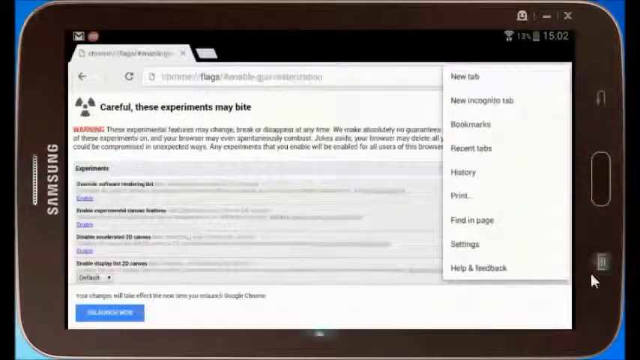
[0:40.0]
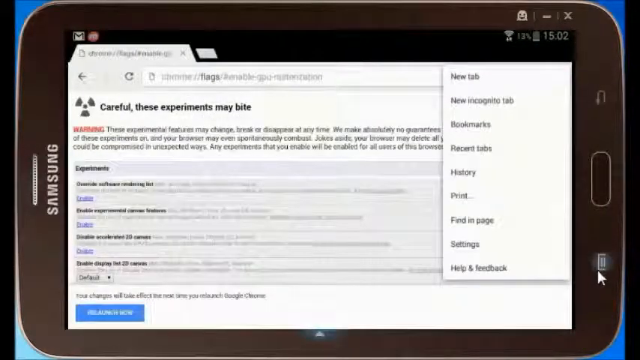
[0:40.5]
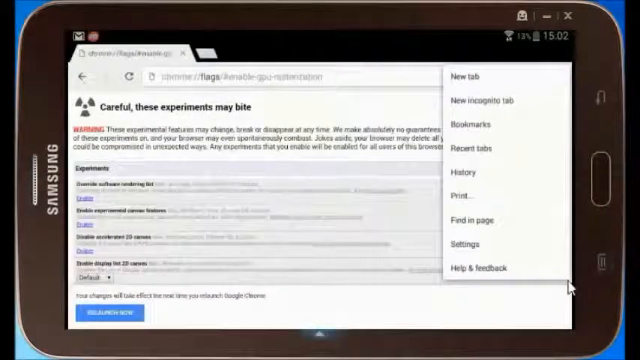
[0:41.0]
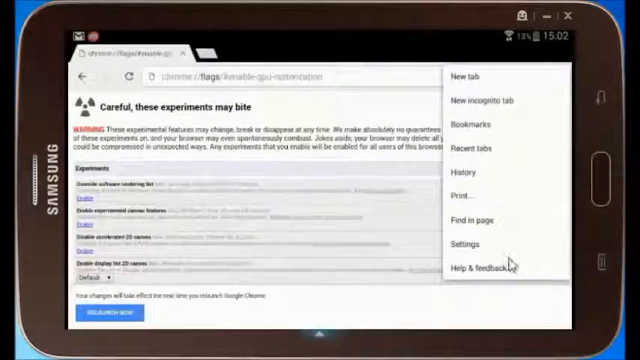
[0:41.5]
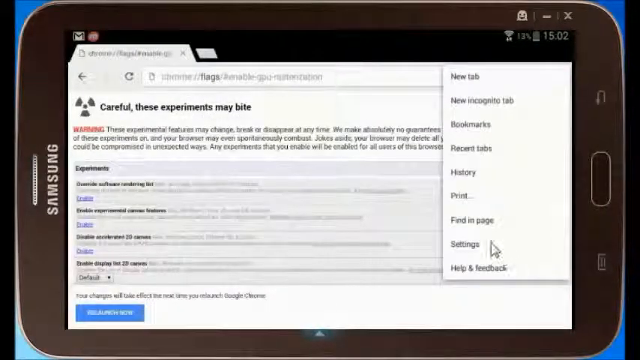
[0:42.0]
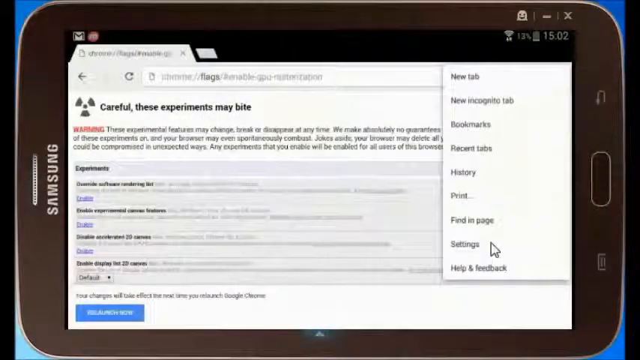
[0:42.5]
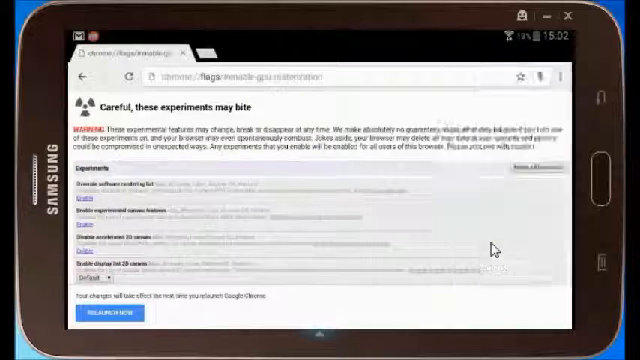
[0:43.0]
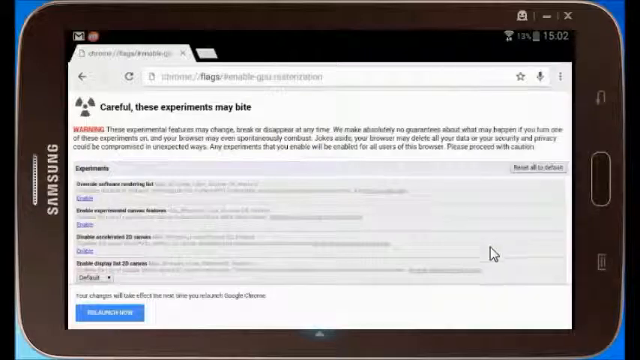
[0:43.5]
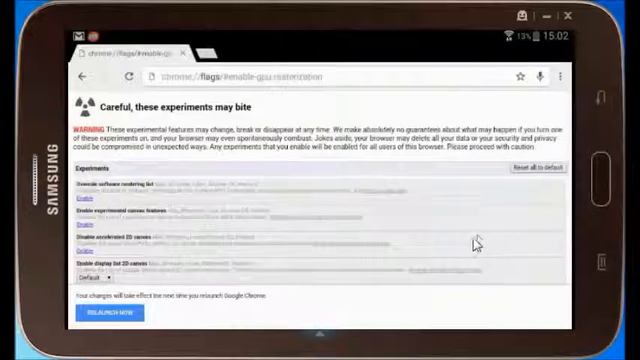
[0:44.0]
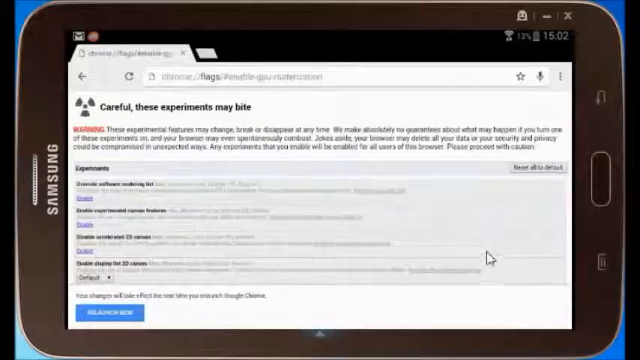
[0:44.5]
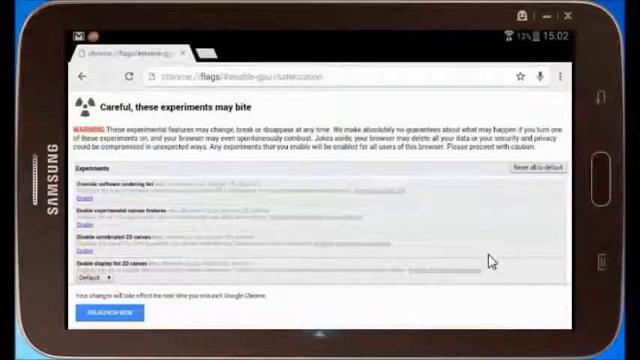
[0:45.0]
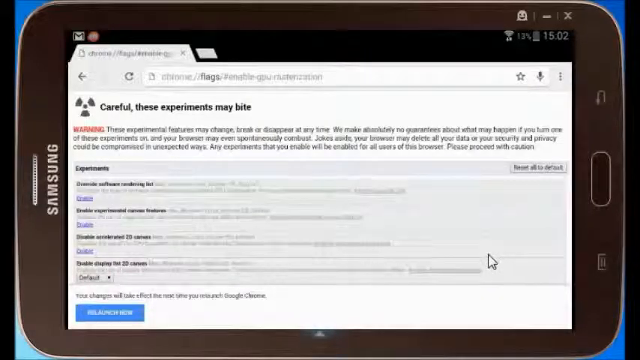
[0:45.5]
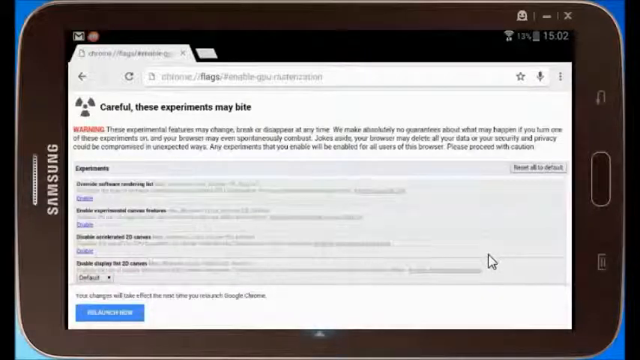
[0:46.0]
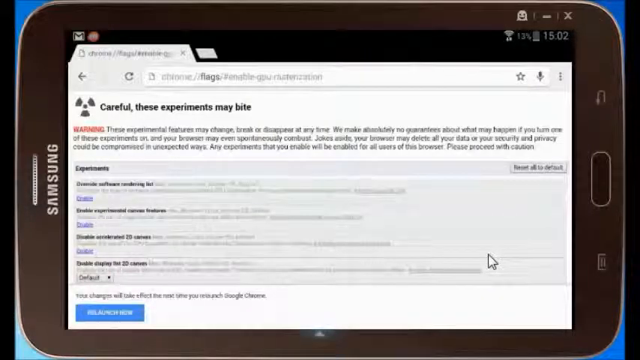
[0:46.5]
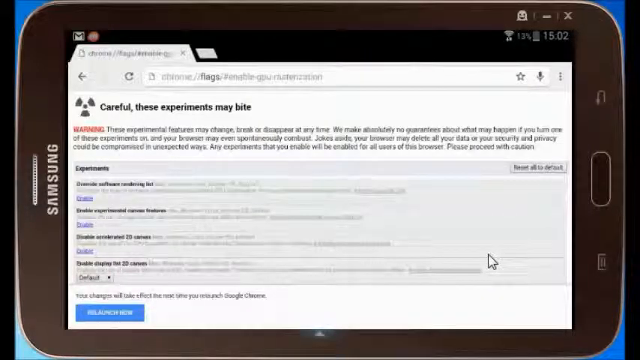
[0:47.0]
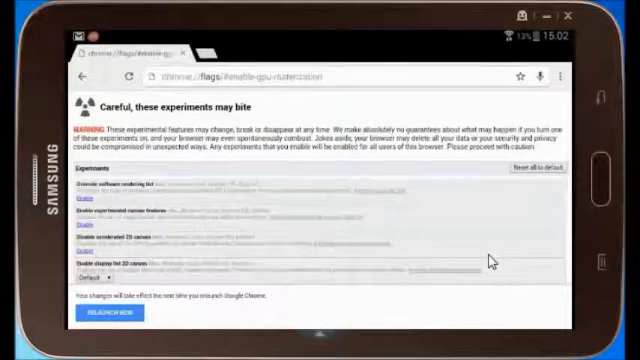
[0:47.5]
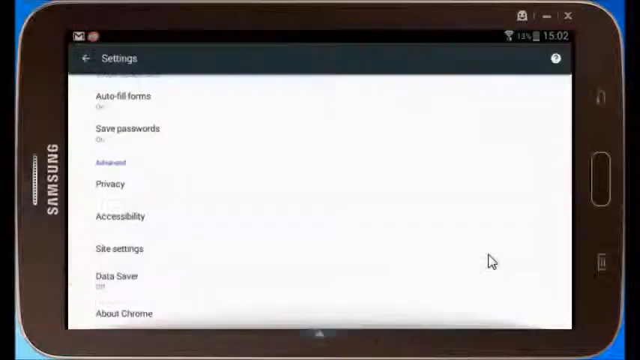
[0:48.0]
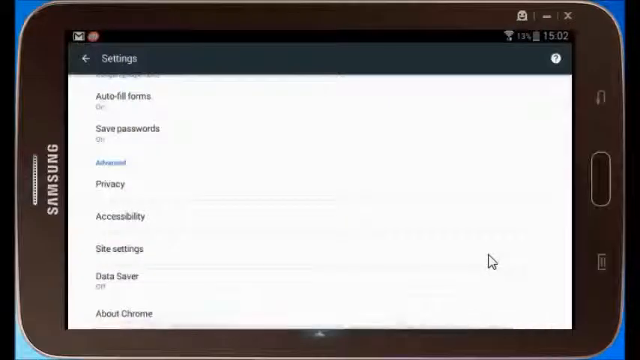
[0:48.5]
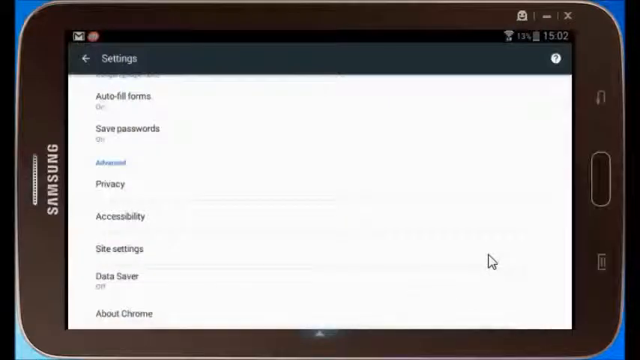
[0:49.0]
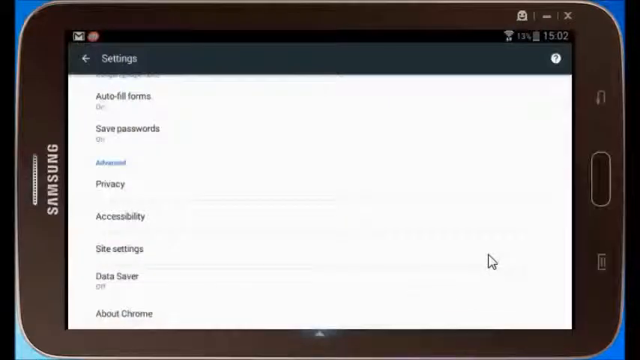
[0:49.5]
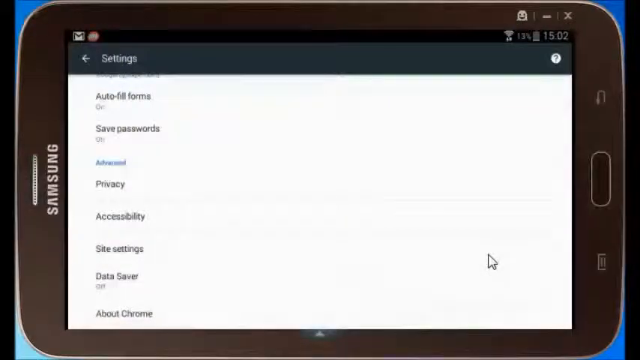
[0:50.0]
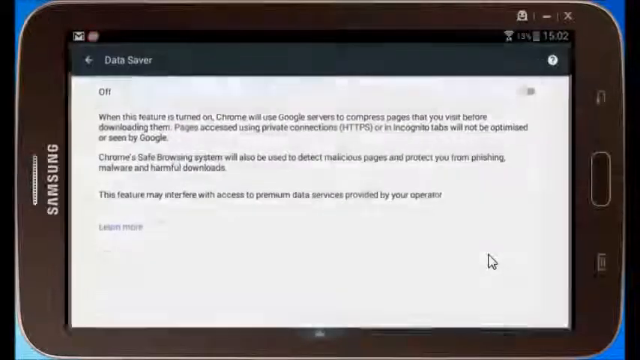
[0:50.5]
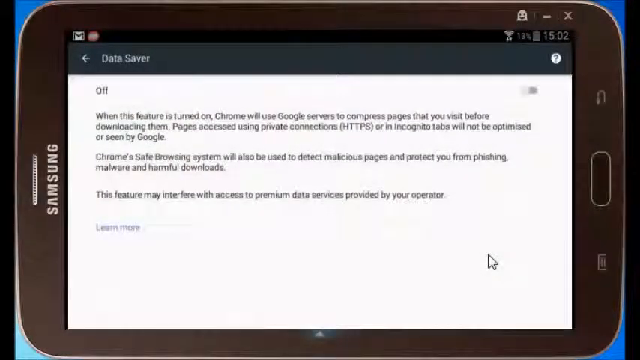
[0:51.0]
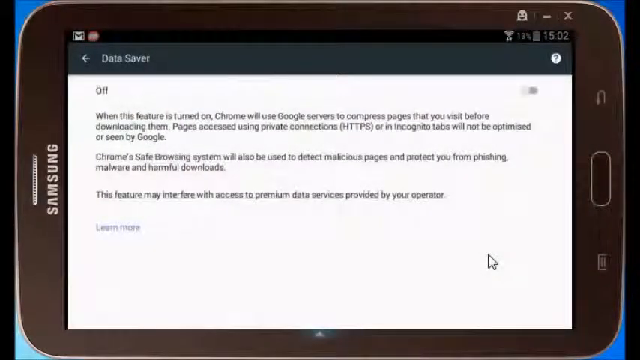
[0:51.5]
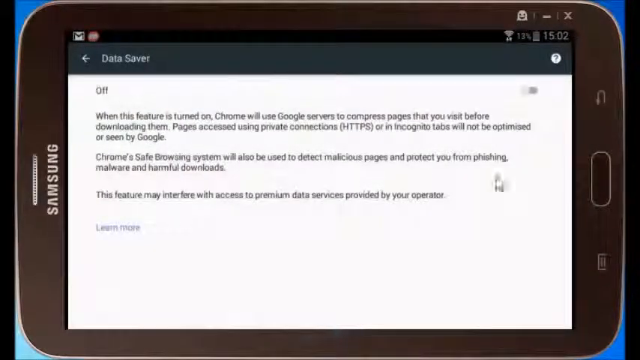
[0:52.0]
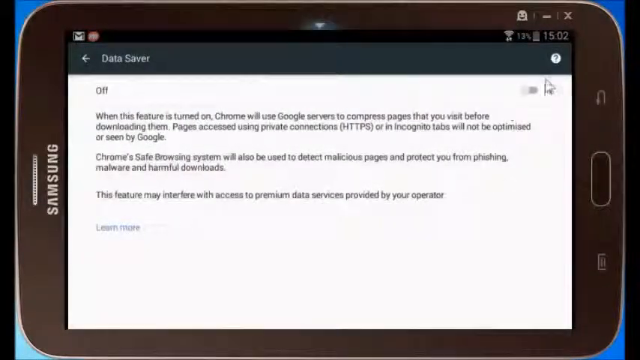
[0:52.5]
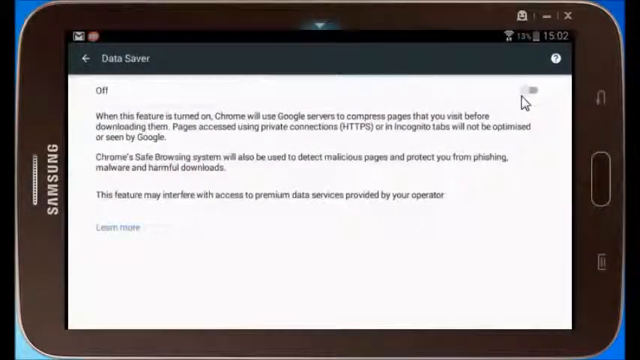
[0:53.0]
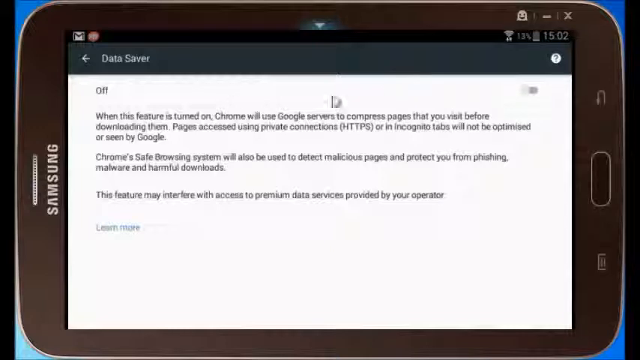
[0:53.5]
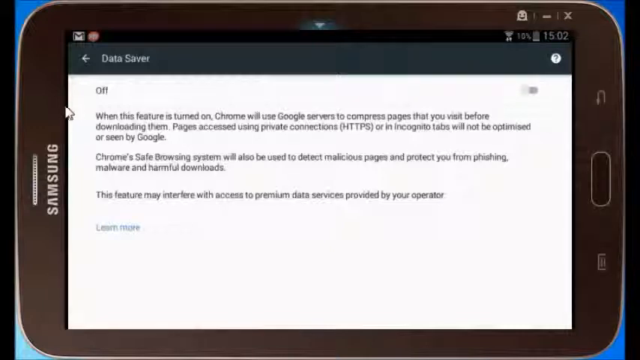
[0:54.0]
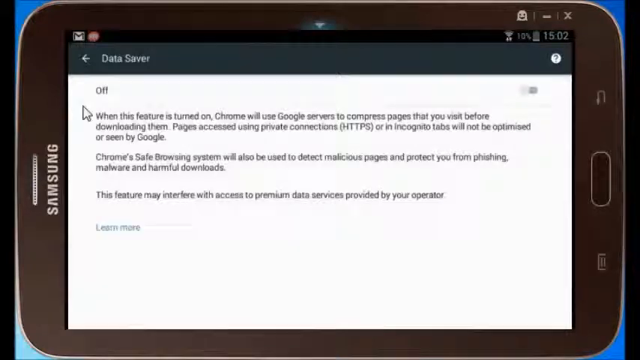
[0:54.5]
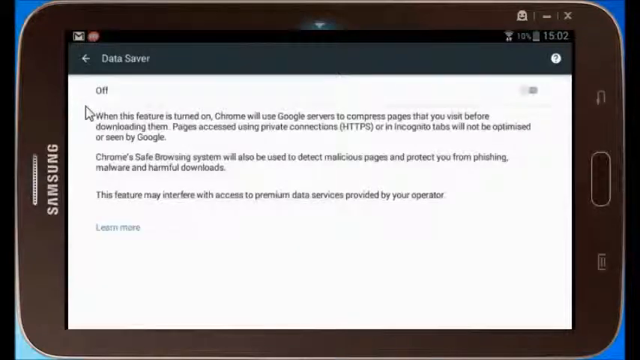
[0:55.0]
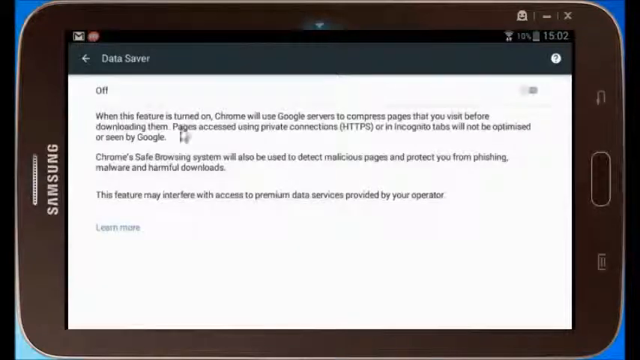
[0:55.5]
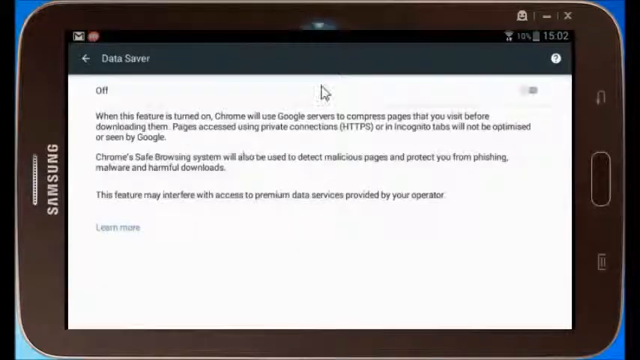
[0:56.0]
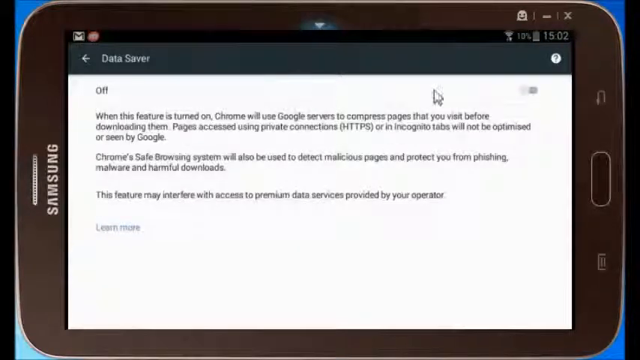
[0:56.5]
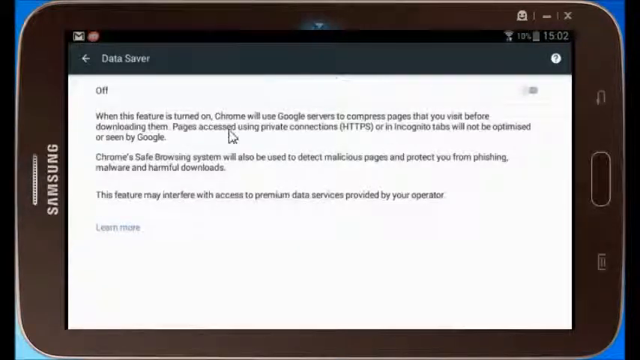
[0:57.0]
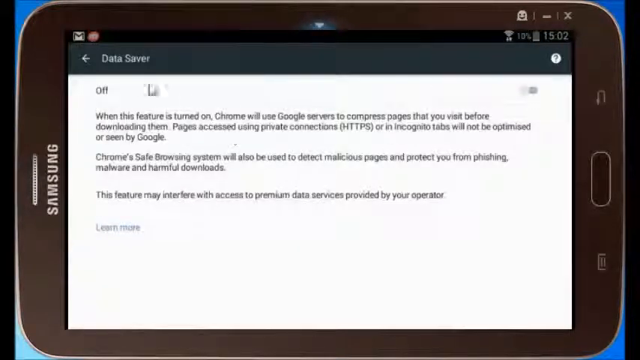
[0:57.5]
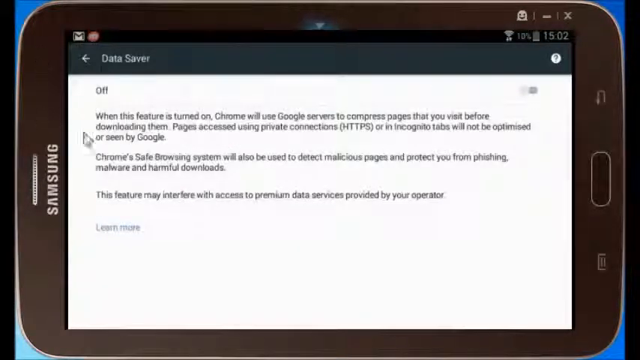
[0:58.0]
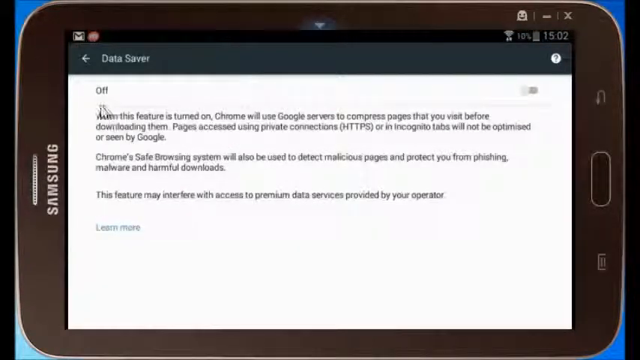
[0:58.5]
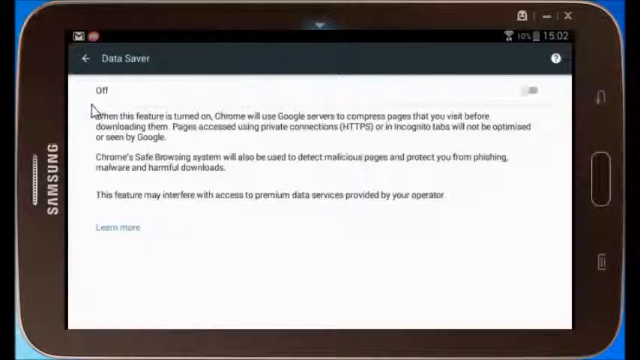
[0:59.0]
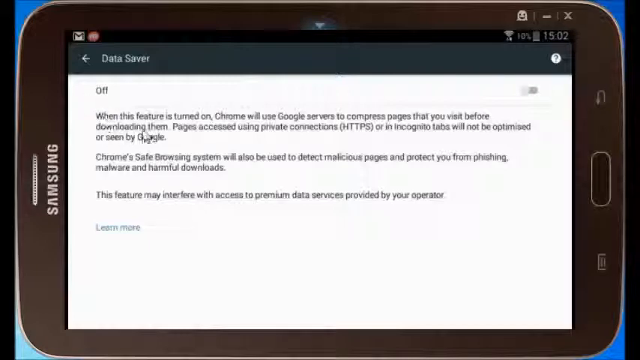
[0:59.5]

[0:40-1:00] The sequence seems to go a little backwards. The cursor clicks the three buttons on the right side of the Google Chrome screen to reach the settings, then opens the data saver, which is off. The cursor circles the toggle switch labeled off, then circles all the words on the data saver page before clicking the back button to return to the settings. The screen then seems to be on the experiments page.